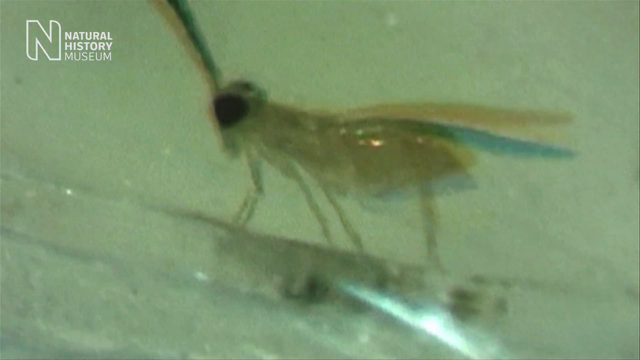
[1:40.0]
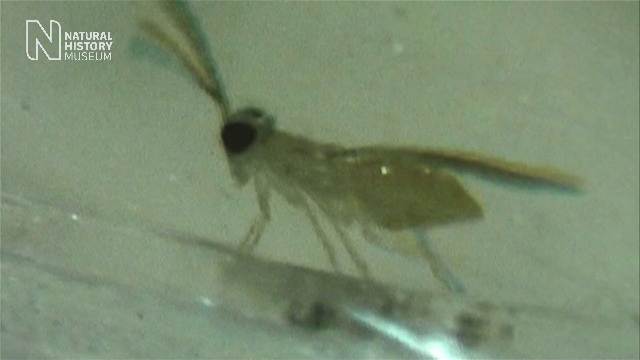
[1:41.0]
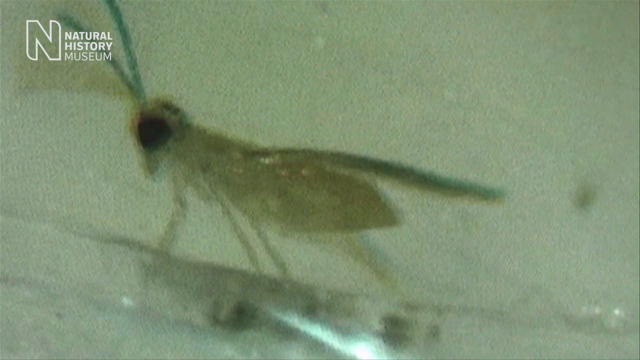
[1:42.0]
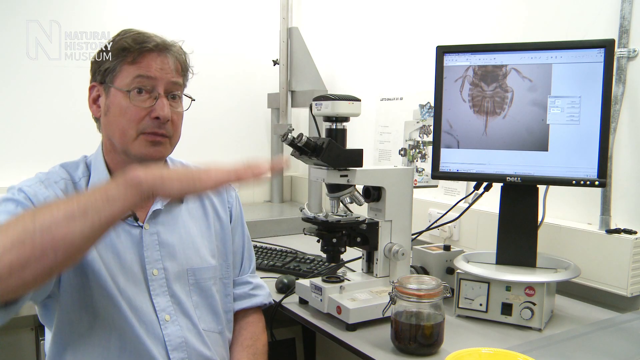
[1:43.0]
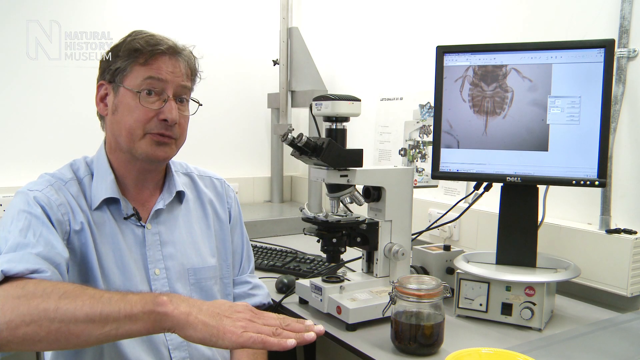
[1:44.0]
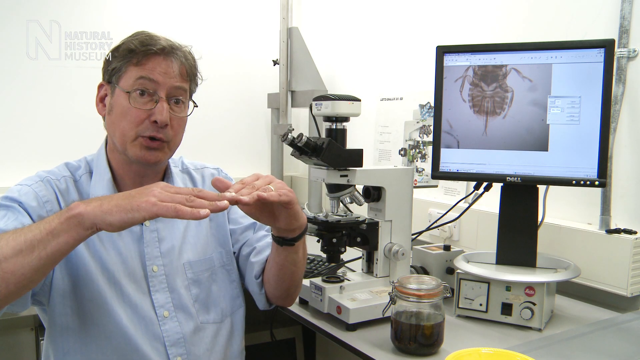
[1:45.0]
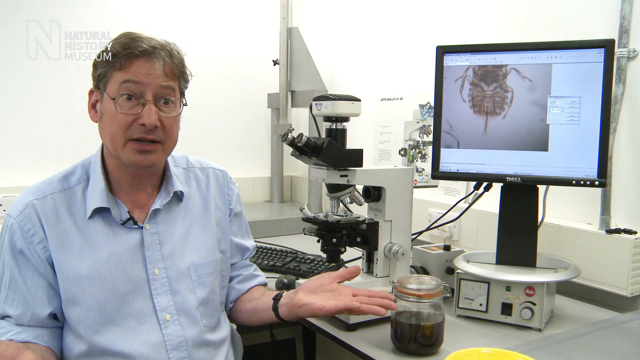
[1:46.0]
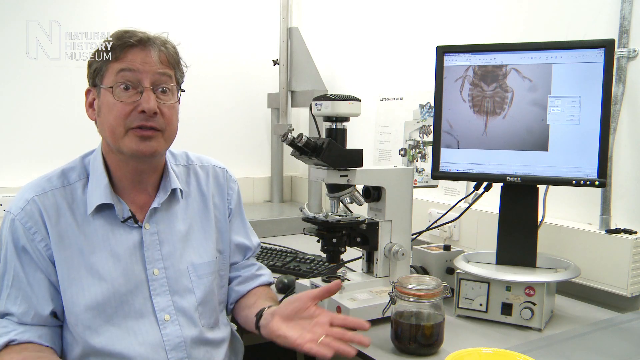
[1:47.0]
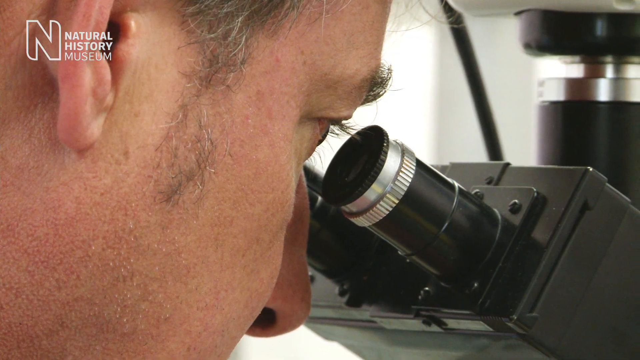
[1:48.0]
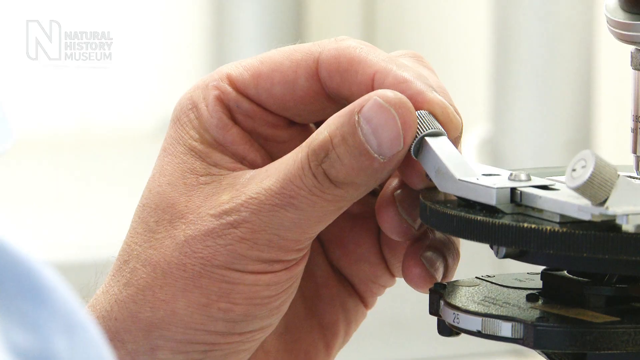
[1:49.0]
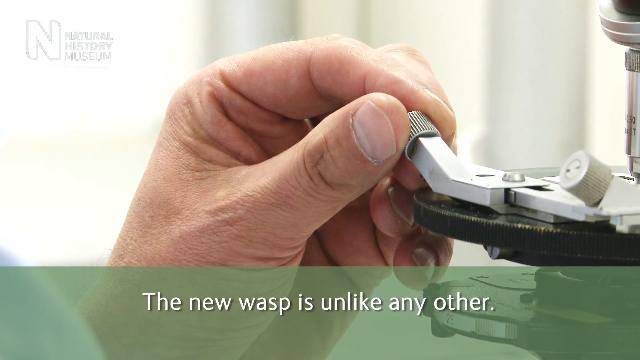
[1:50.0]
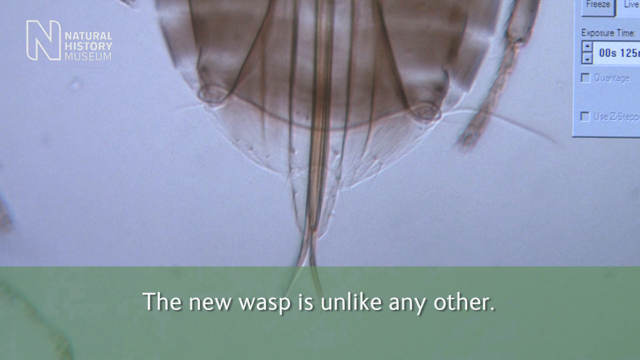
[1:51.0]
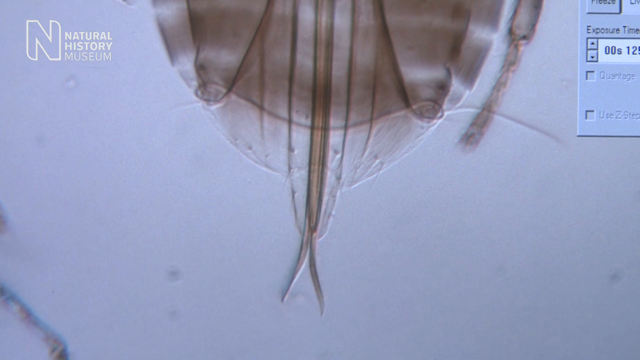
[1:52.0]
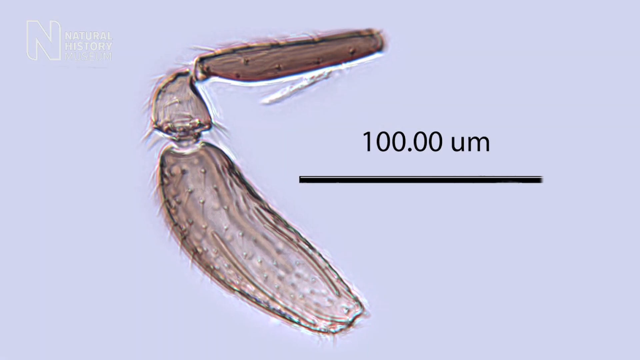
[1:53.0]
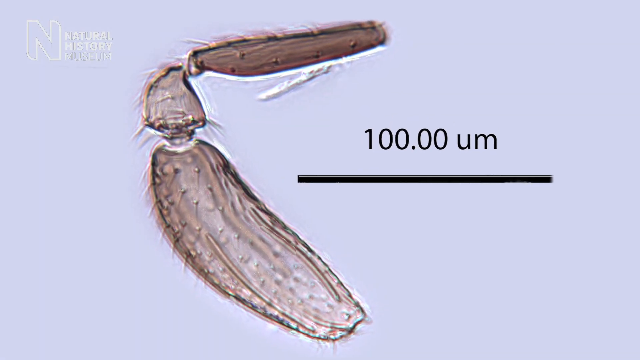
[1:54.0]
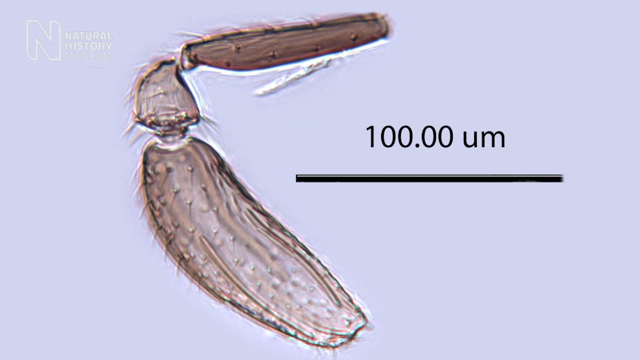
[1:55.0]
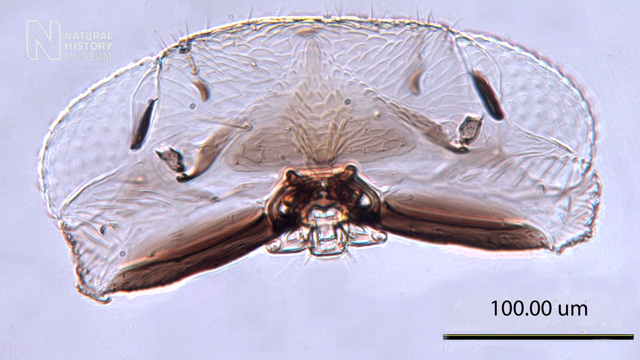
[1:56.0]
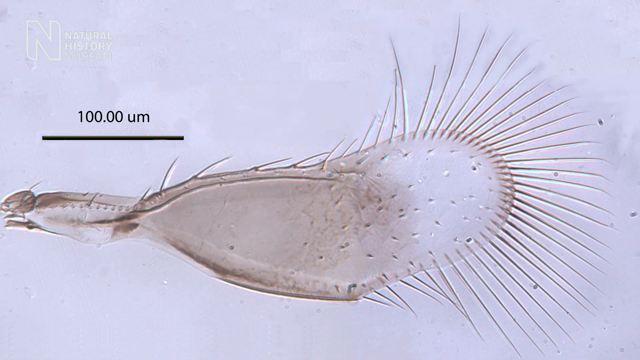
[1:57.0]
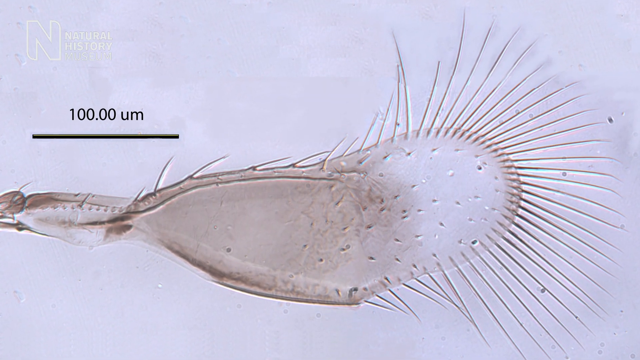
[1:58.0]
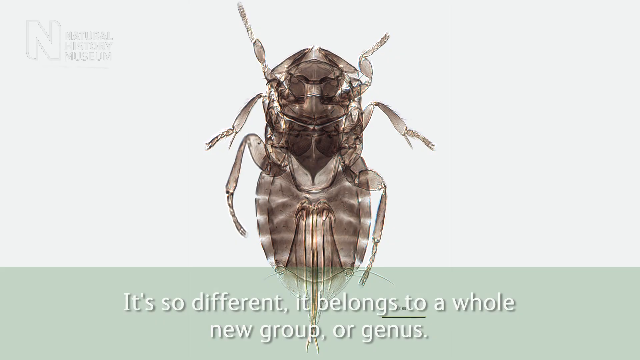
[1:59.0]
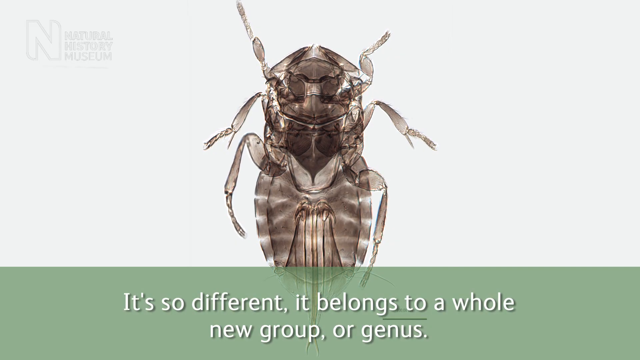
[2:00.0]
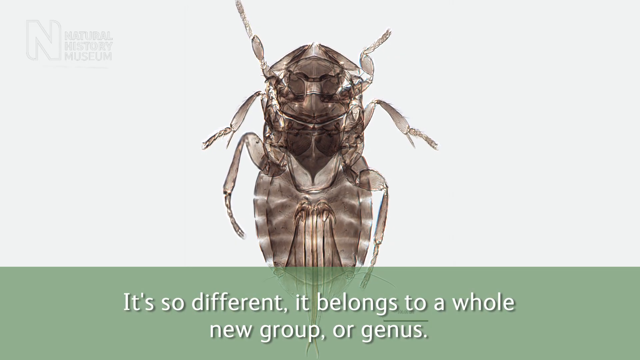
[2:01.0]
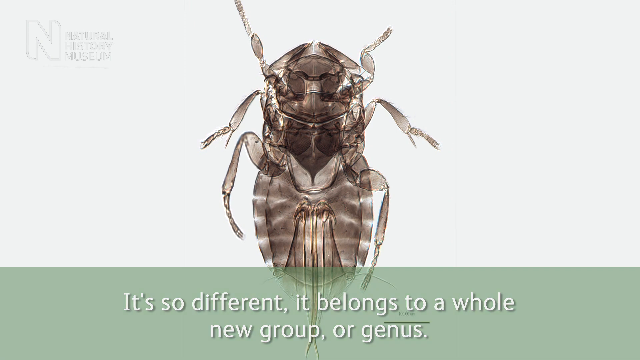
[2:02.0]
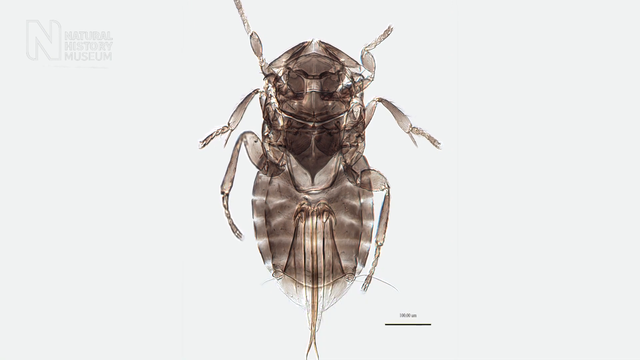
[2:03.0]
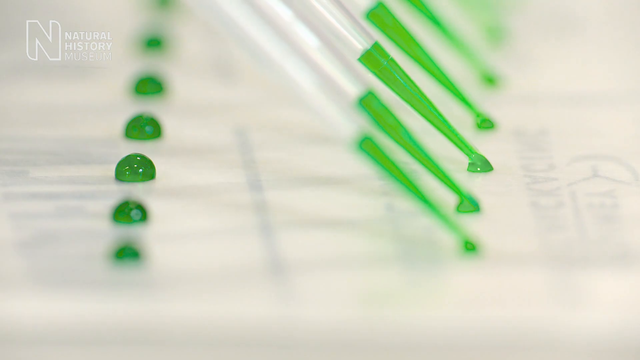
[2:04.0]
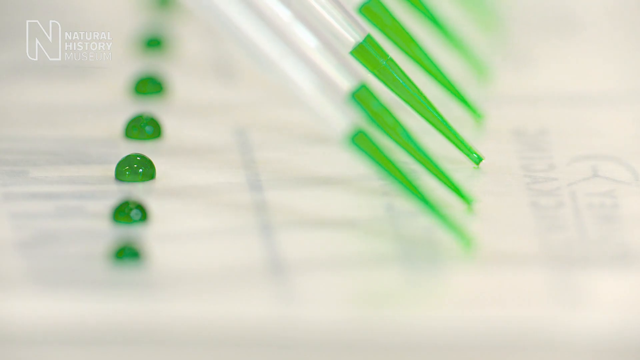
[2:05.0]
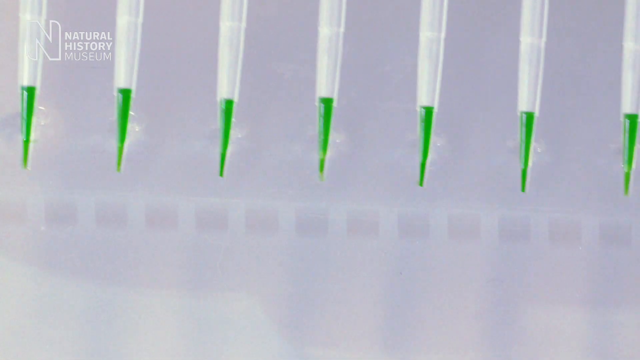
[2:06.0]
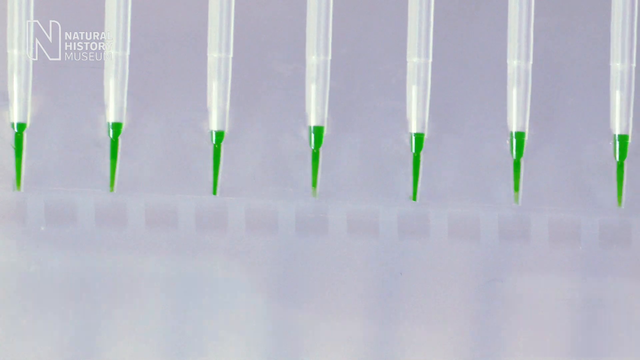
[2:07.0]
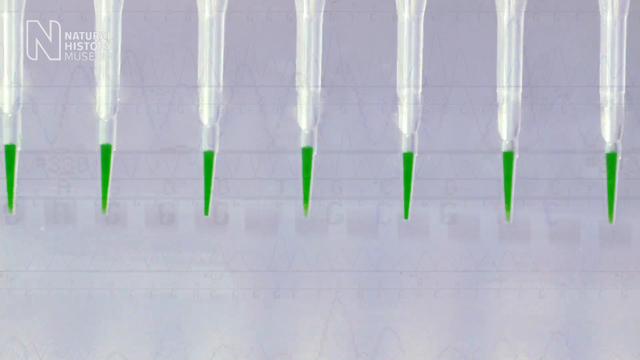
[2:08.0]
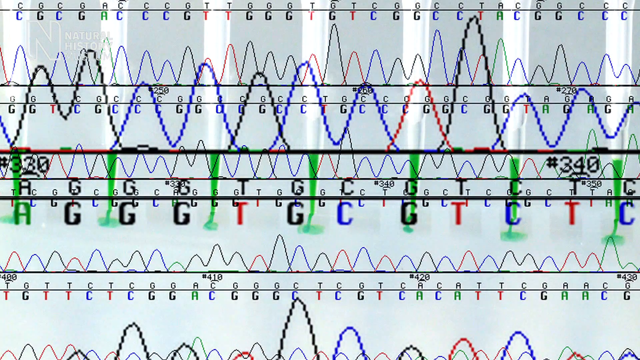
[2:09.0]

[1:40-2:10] The translucent wasp with black eyes walks from left to right, moving its wings and antennae backwards and forwards and up and down. The video cuts to Dr. Prashaska on the left, gesturing with his hands: he raises them, then moves a flat hand gradually down all the way off the screen, slightly smiling. He then brings his flat hands together with the fingers pointing at one another, then opens his hands up. He again looks slightly surprised. Next, somebody looks very carefully down through a black microscope, turning the knobs on the left-hand side of the platform, which holds some slides; the left hand moves the knob backwards and forwards to move the objective up and down. Text refers to the wasp being unlike any other. A close-up of part of the insect follows, gradually moving in, perhaps through a microscope; it is unclear which part is shown, possibly the leg, since the next shot shows a leg with three segments: a fatter segment at the bottom going up at a 45-degree angle to the top left, a small joint, and a smaller segment going horizontally to the right. The whole thing is less than 100 micrometers. The camera moves in to show more detail. Another shot shows something unidentified, possibly a wing: translucent and highly detailed, with something joining it at the bottom and middle, looking like a hemisphere with a little extra on each side, as the camera pans in. Another shot shows something apparently about 300 micrometers long judging by the scale: translucent, with a sharper or thinner area towards the left-hand side, gradually fattening out, and then a hemisphere with a large number of white hair-like protrusions. The camera then shows the whole insect with six legs, viewed vertically from the top, with the head, perhaps antennae facing the camera and not visible, and the abdomen going down to the bottom. Text indicates it is so different that it belongs to a whole new group, possibly a genus or species. The camera points in. A multi-pipette with green fluid points at about 135 degrees from the top towards the bottom right; it has already ejected some and is drawing green fluid up into it, with another series of green dots a little further along. Another shot shows the multi-pipette going down from the top, white, with green fluid going down to a point, all filled with the green fluid. Then a printout trace appears, possibly chromatography, amino acids or DNA, with letters such as G, T and C and wave-like lines going across the page, moving towards the right.